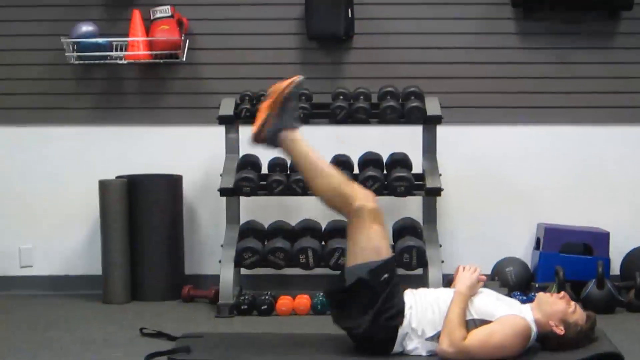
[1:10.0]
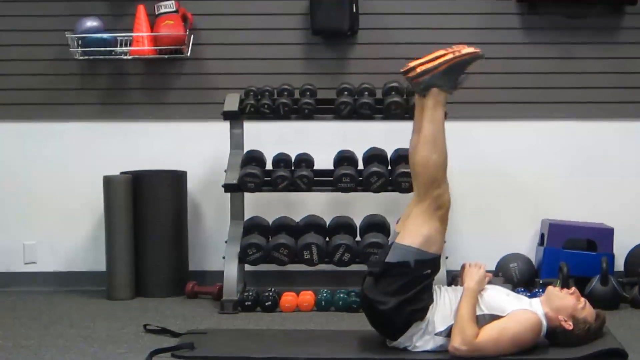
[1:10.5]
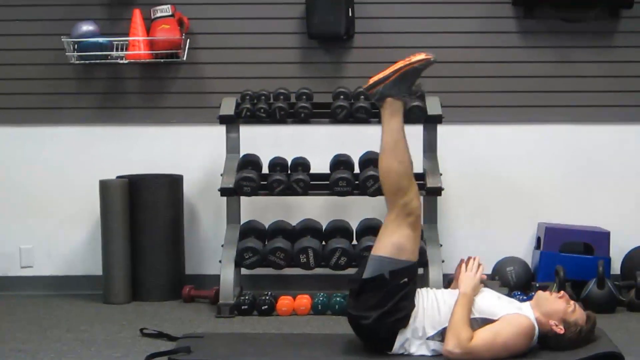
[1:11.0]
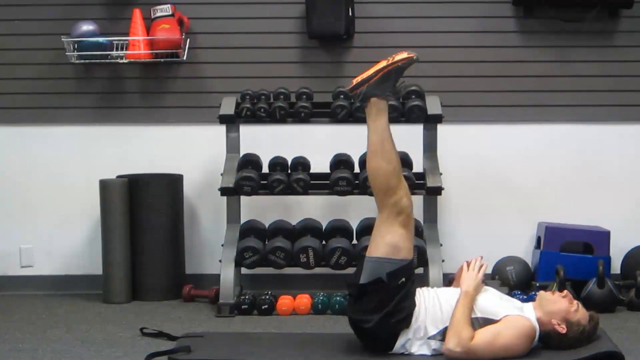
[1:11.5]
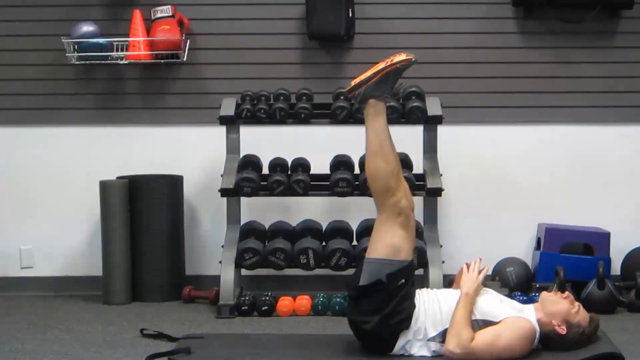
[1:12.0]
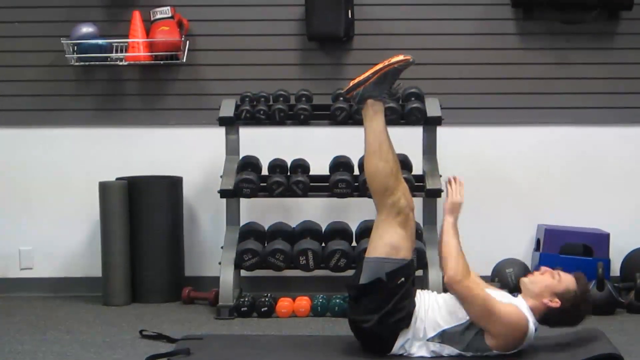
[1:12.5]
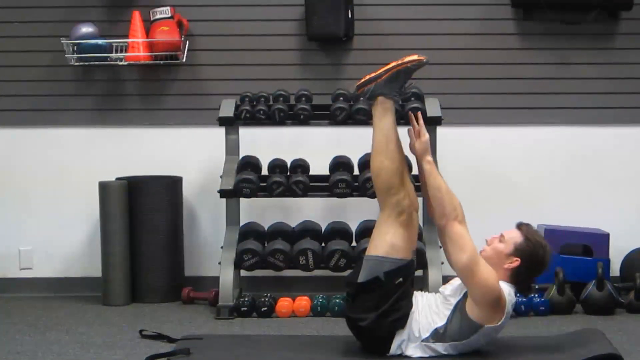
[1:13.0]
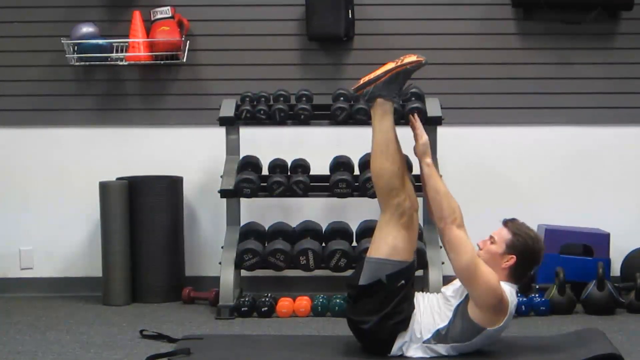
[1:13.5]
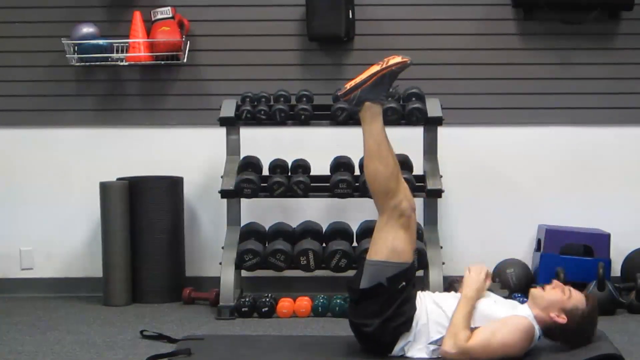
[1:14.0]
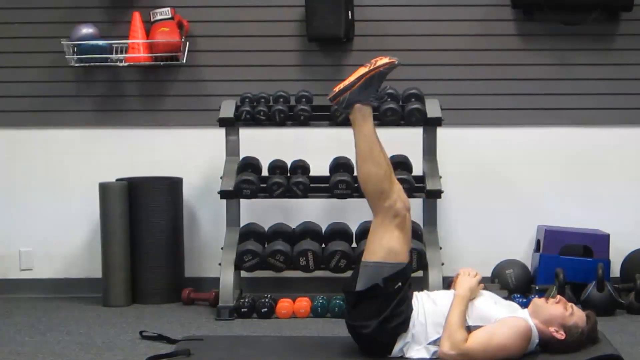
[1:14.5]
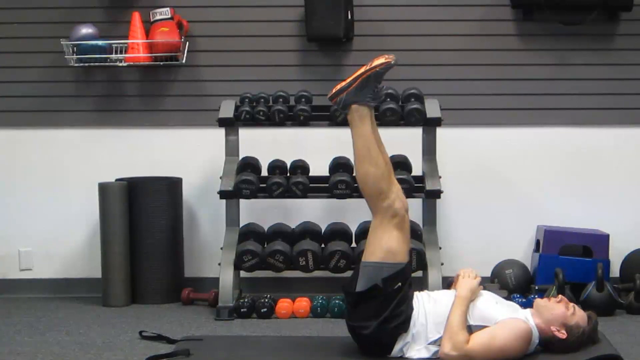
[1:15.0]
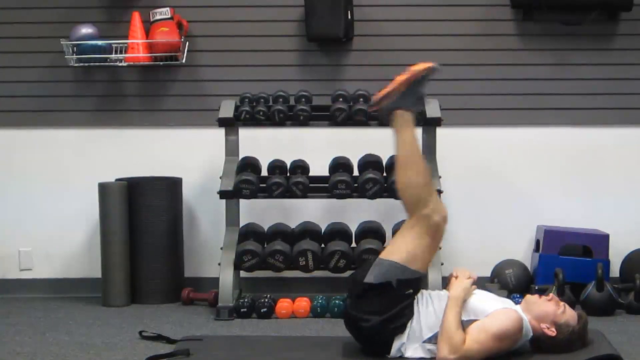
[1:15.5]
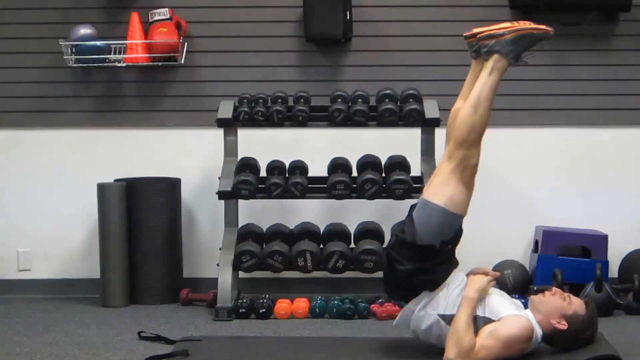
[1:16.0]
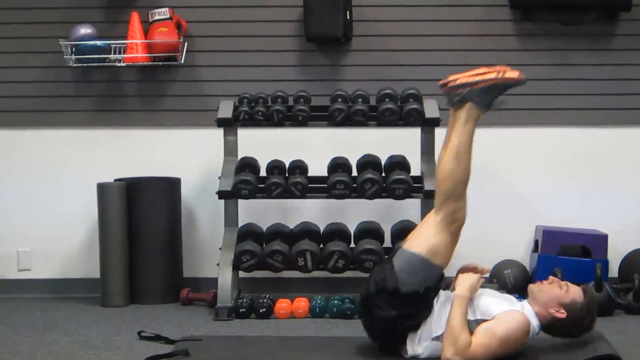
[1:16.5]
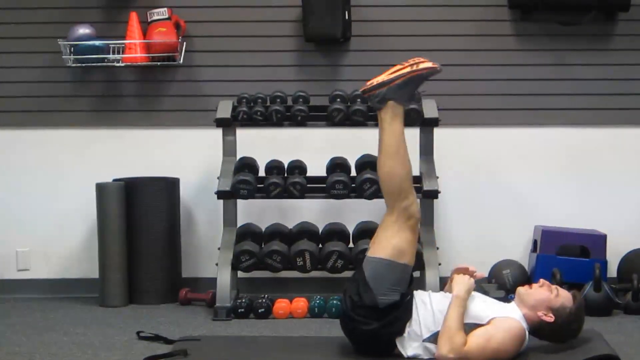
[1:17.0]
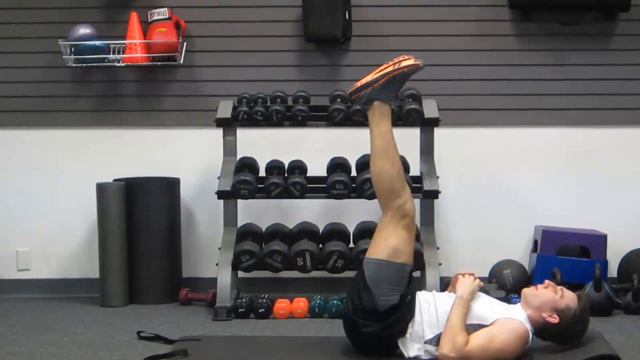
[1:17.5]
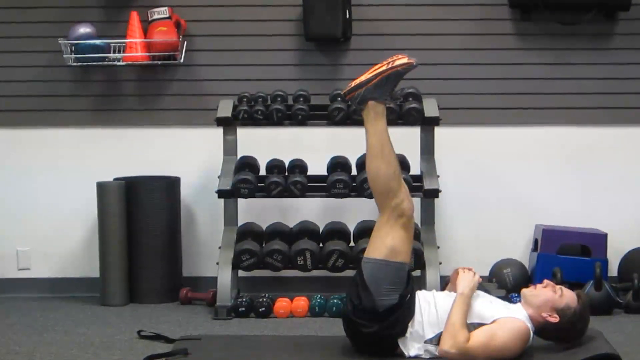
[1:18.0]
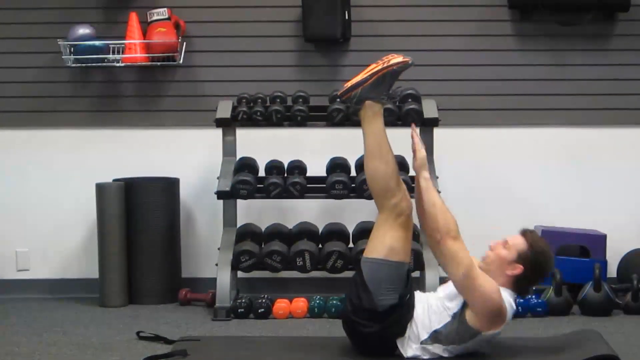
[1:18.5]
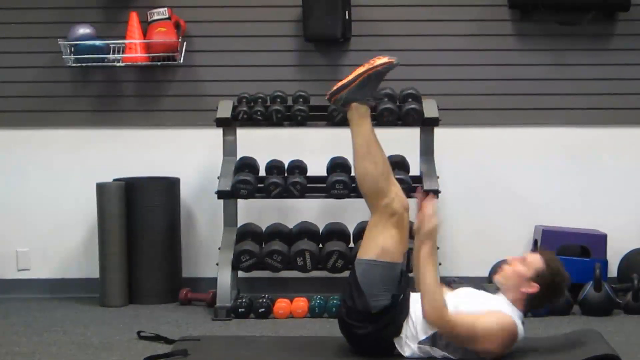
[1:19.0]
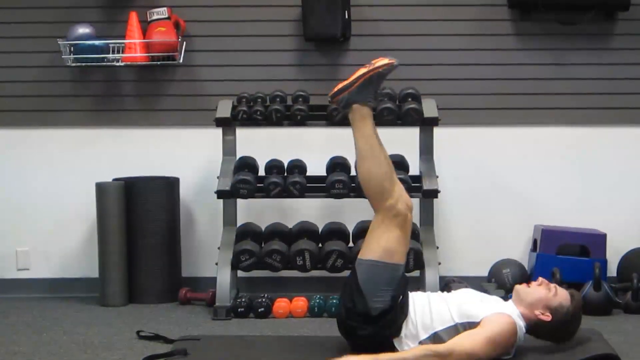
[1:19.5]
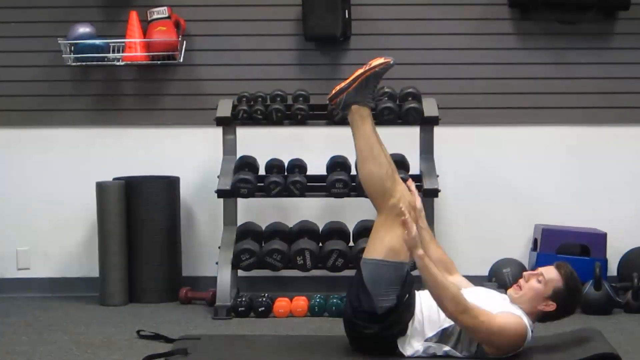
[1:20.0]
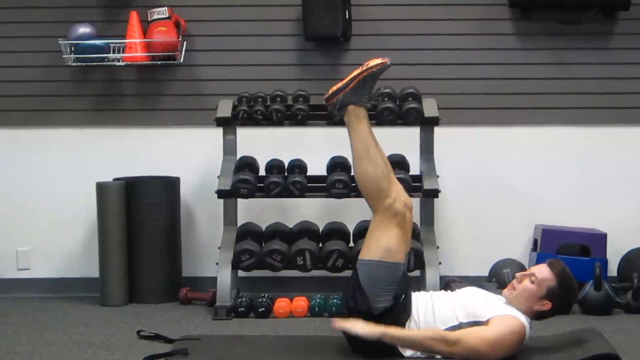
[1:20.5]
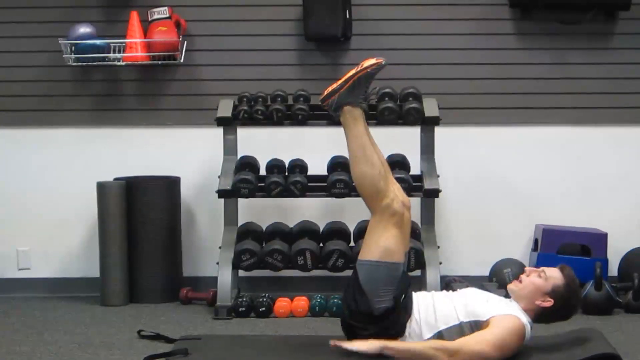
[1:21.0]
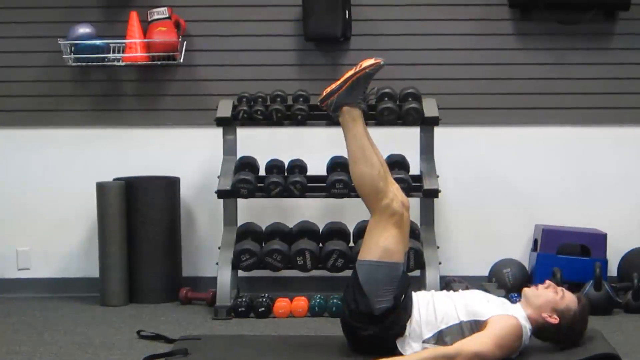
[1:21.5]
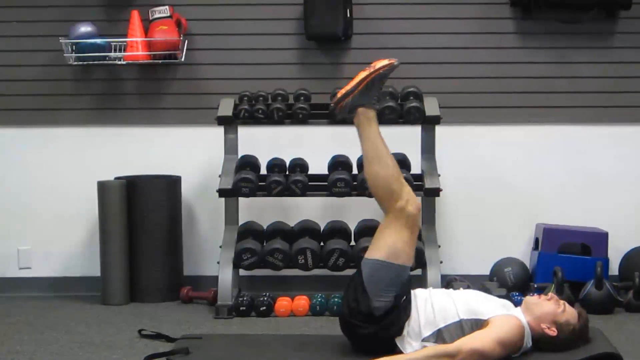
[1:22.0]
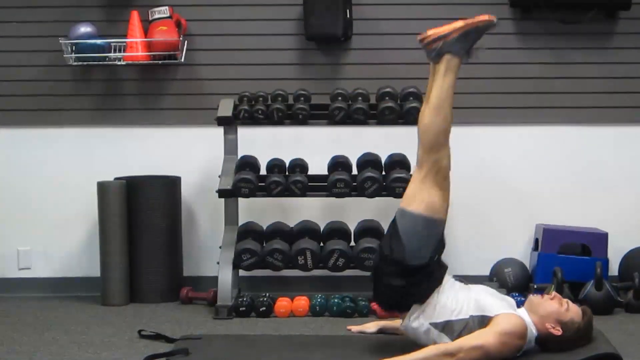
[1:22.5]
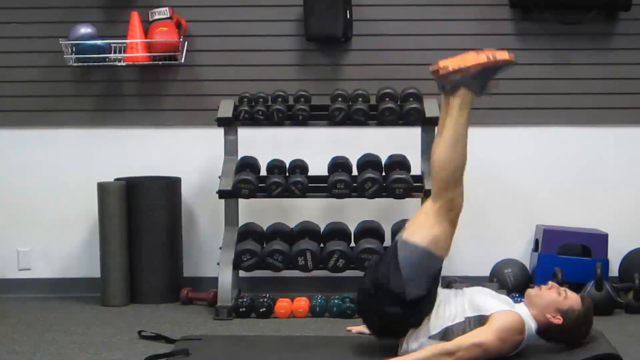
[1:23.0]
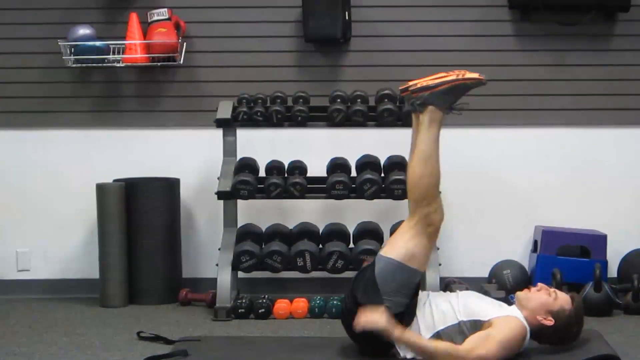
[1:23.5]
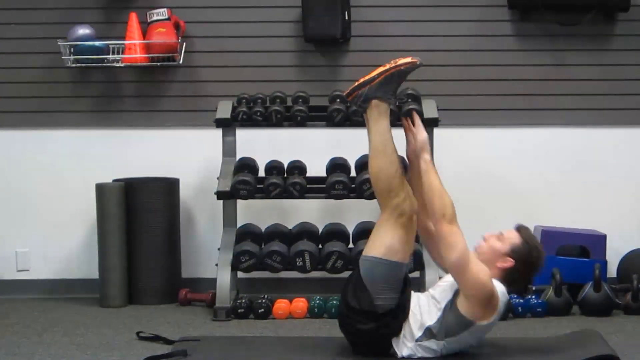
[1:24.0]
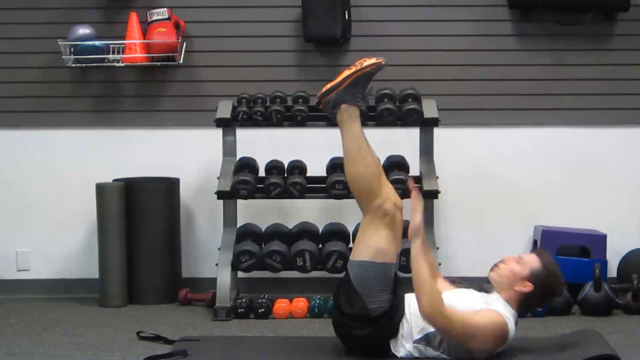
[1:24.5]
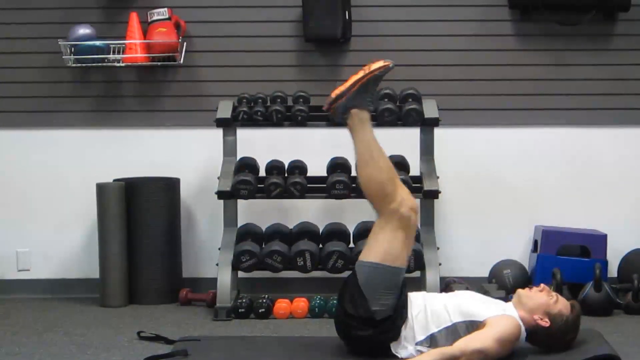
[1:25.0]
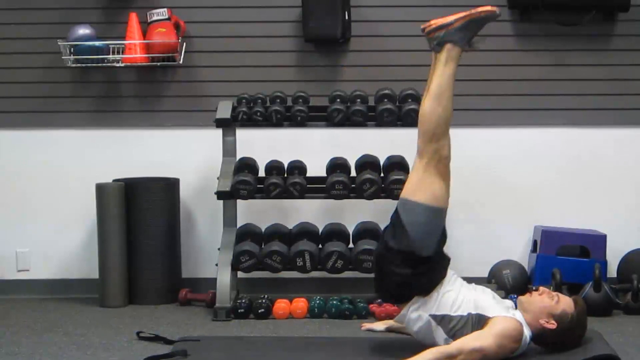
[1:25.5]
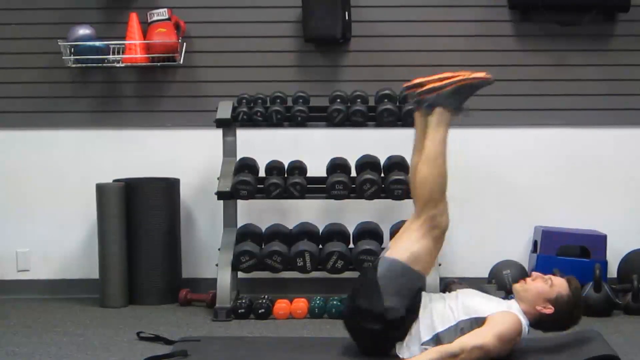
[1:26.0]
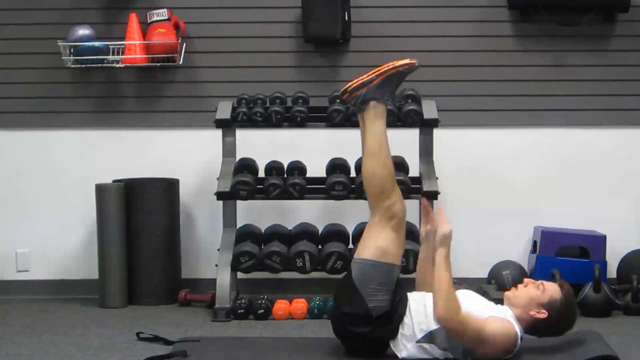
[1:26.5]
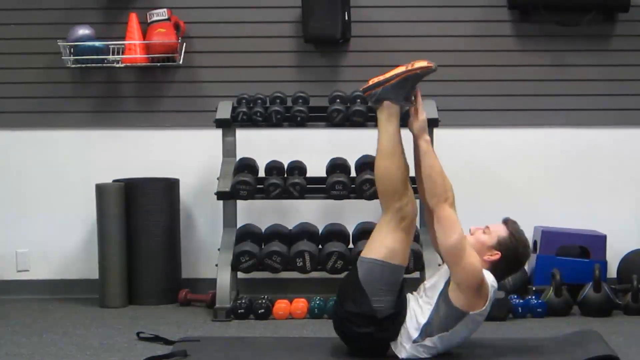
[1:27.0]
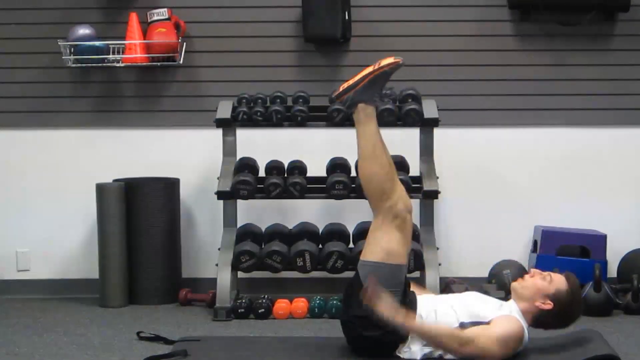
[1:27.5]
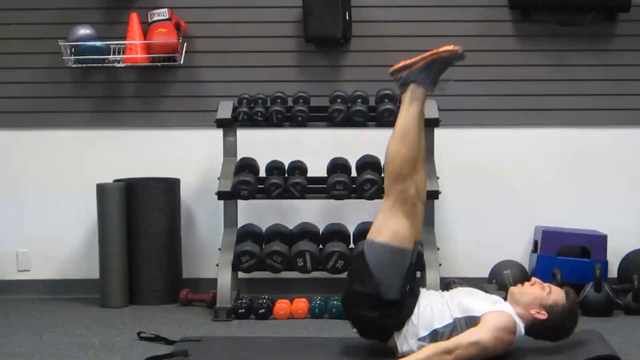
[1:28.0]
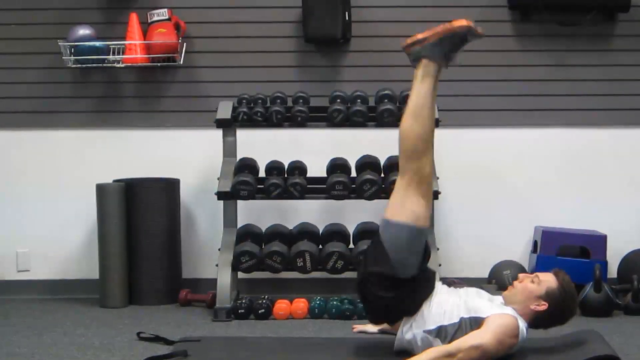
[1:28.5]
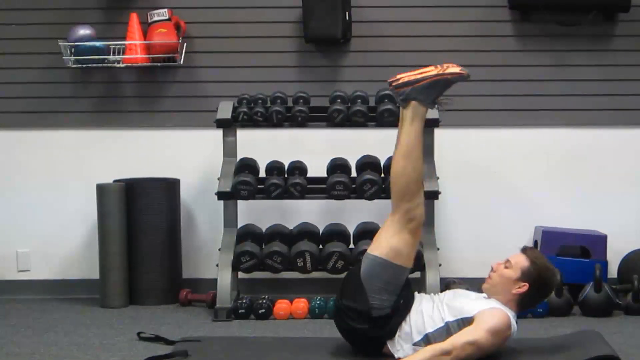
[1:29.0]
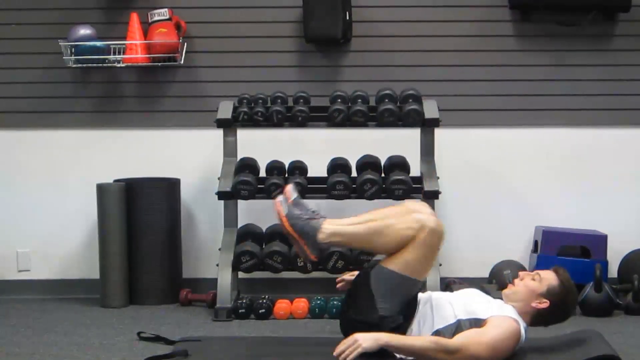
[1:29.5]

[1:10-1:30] Leaning back with his head back, the man puts his arms on the ground together near his hips. He performs a leg raise, bringing his legs from flat toward his body completely straight, with his shoes flat in the air. He seems to use both hands to reach toward his feet while they are up. He then pushes both feet up very high, back toward his head, up and down. He talks, pushes his arms to the side toward his feet again for a leg raise, puts his arm flat on the ground and repeats the process. He seems to bend his knees slightly as he talks and reaches toward his toes, apparently a stretching method or an exercise for his abductors.